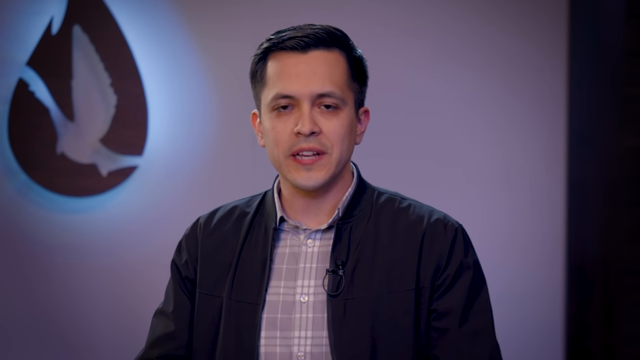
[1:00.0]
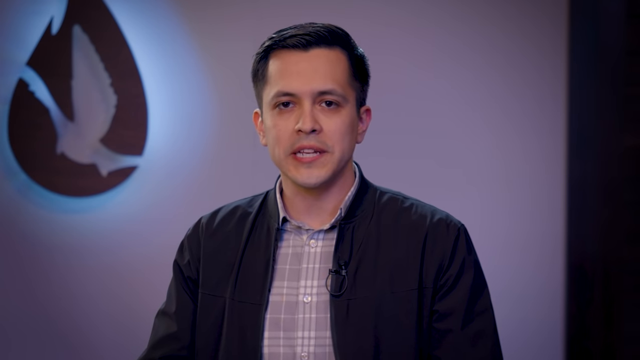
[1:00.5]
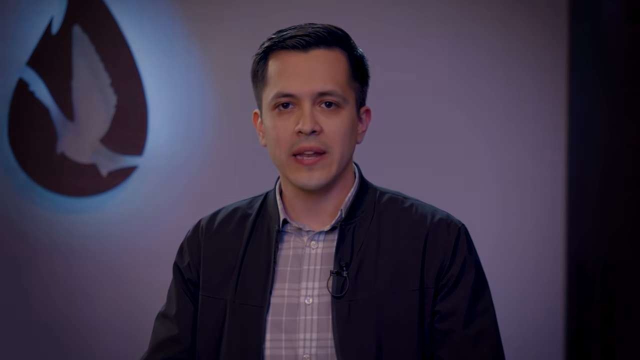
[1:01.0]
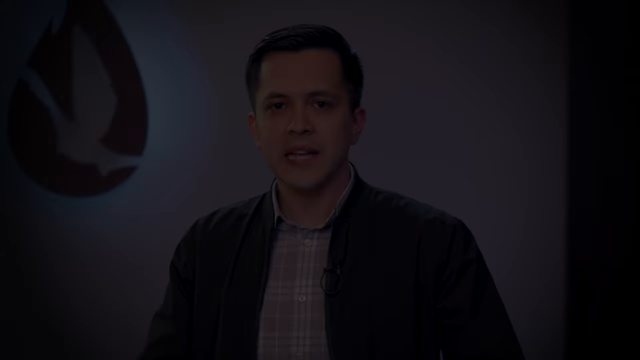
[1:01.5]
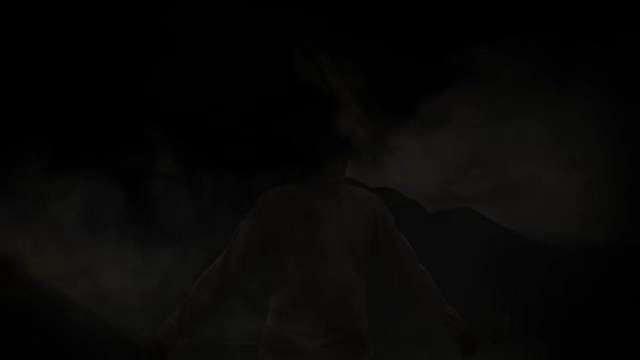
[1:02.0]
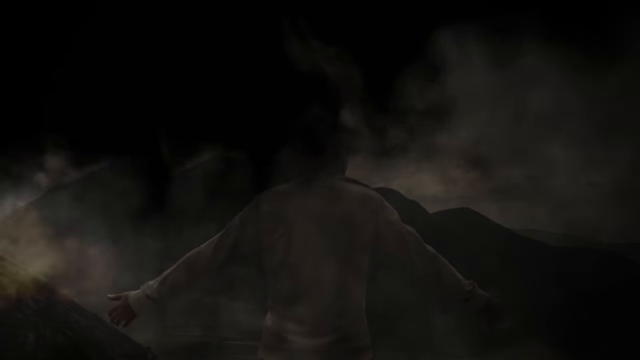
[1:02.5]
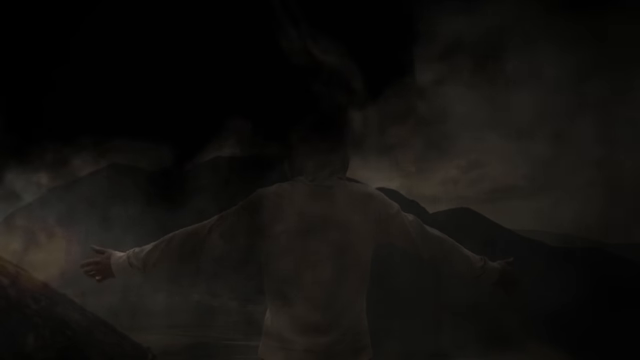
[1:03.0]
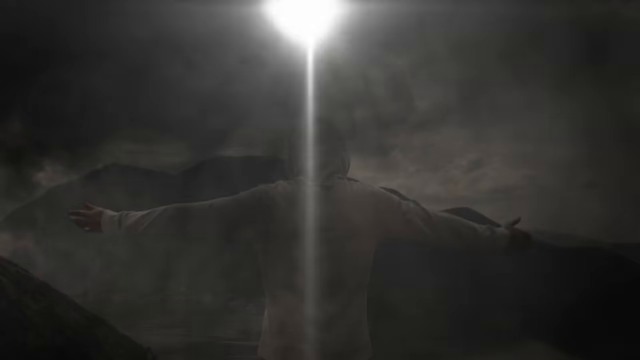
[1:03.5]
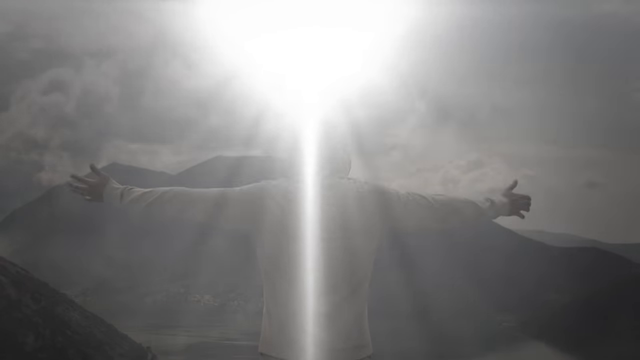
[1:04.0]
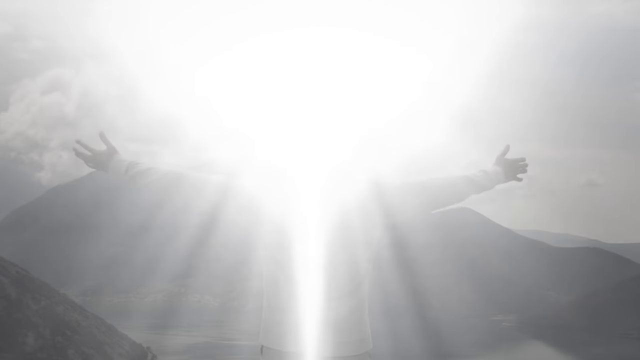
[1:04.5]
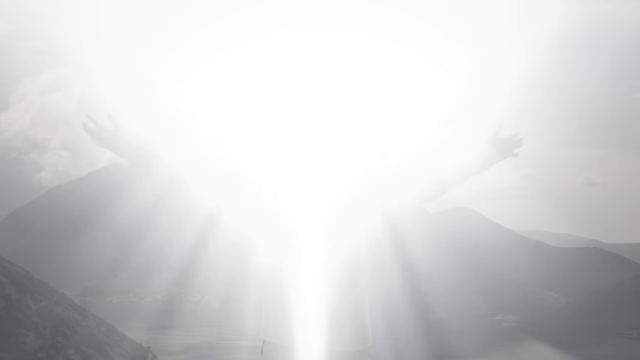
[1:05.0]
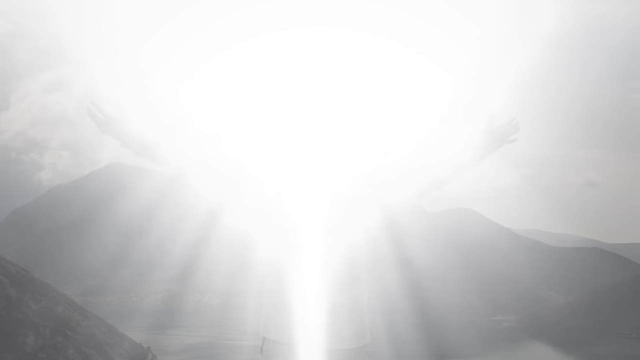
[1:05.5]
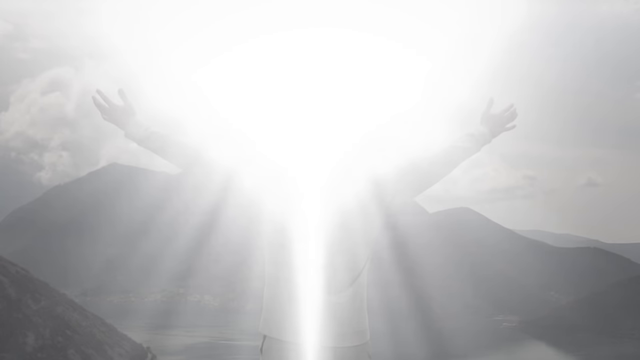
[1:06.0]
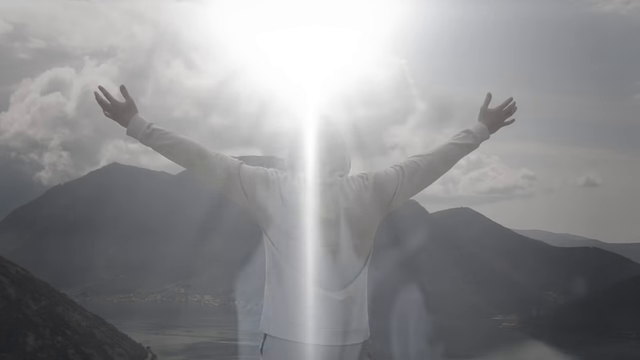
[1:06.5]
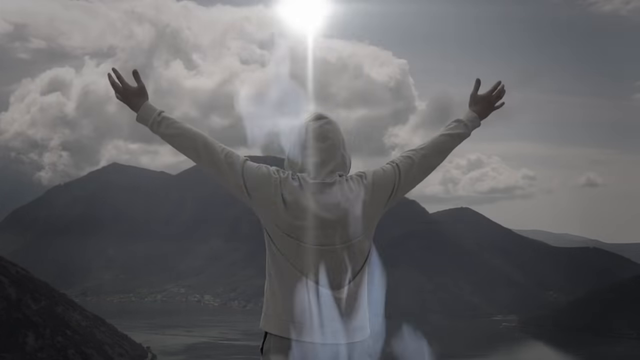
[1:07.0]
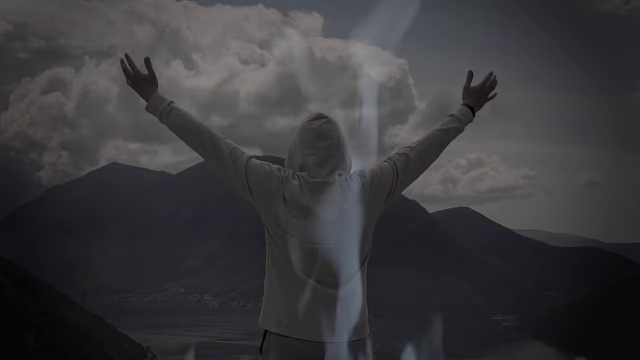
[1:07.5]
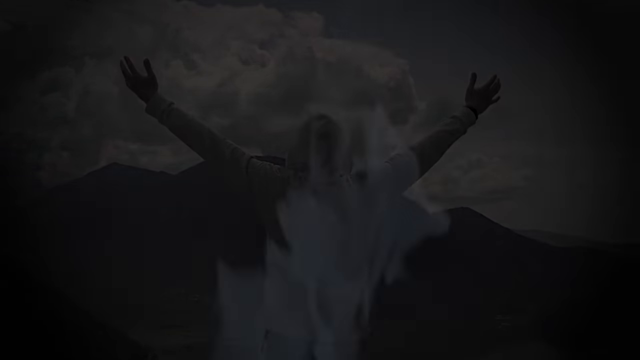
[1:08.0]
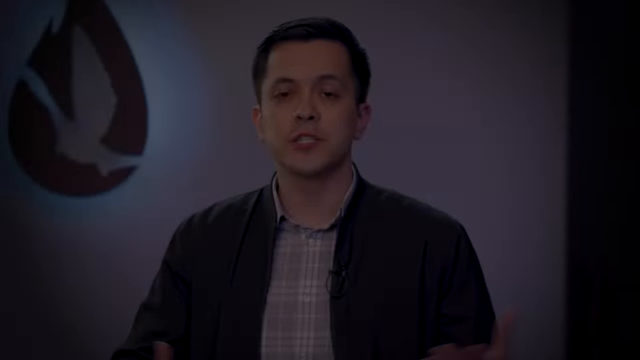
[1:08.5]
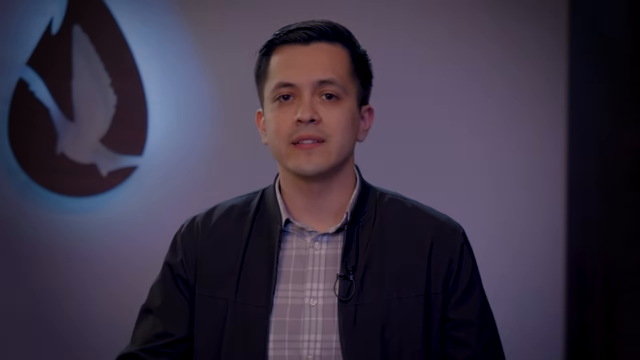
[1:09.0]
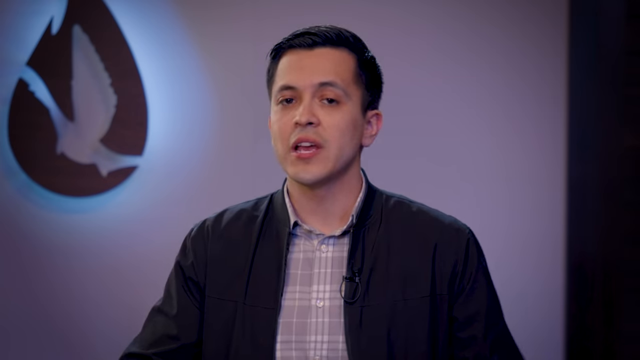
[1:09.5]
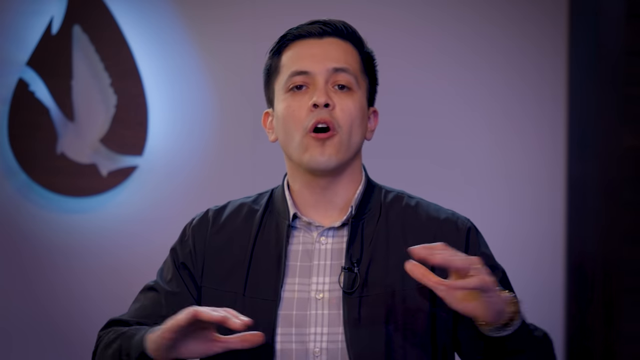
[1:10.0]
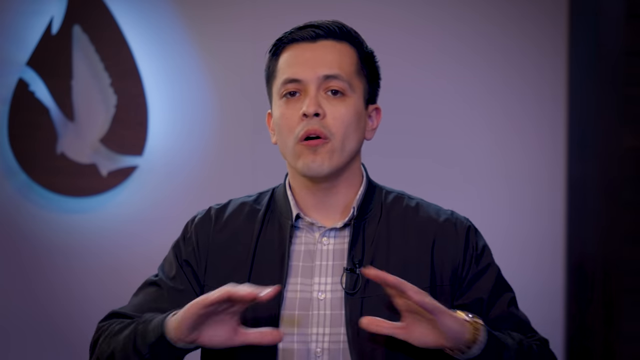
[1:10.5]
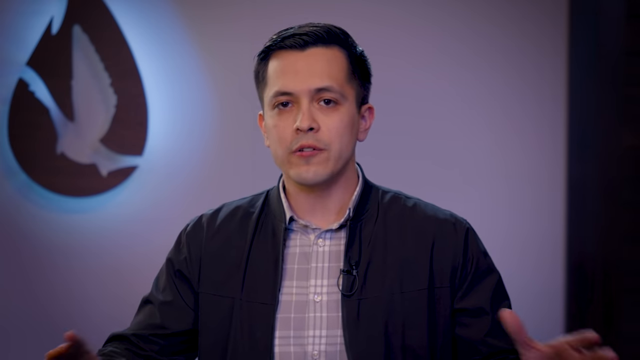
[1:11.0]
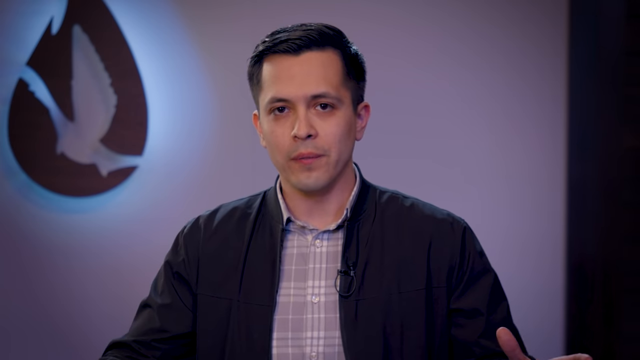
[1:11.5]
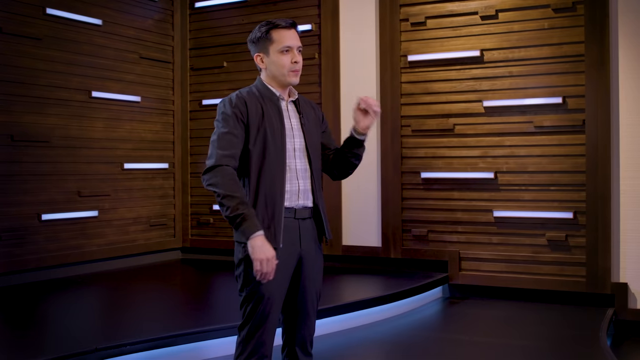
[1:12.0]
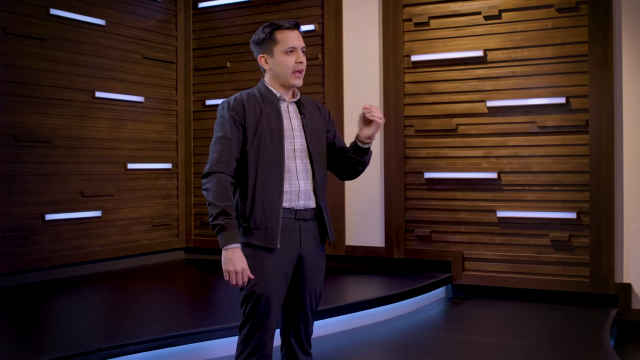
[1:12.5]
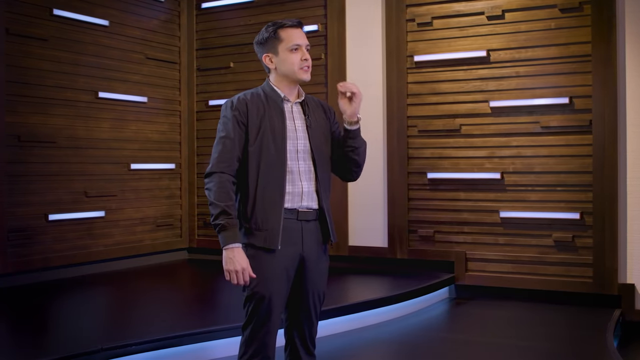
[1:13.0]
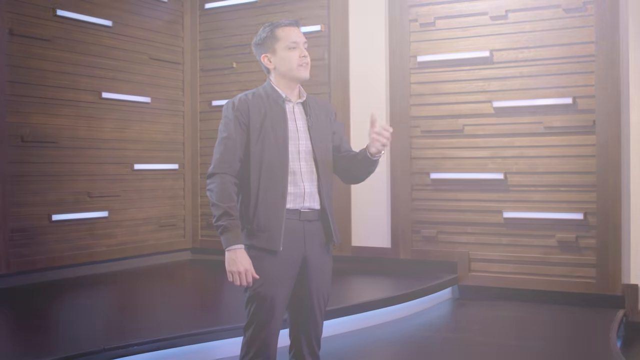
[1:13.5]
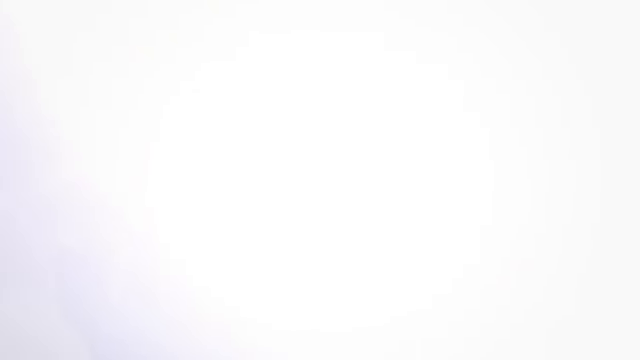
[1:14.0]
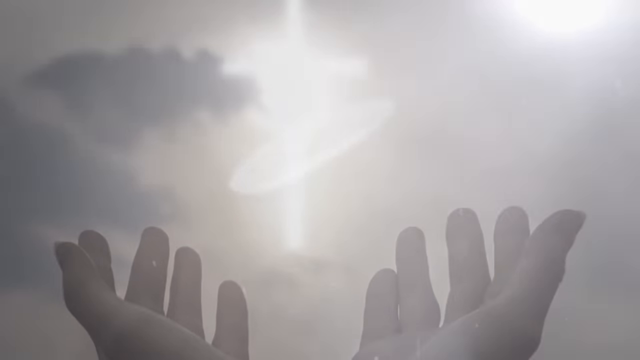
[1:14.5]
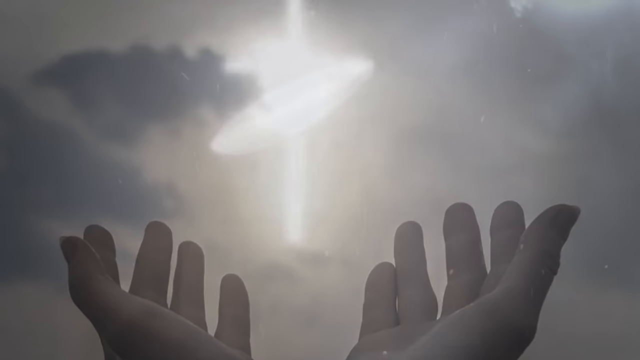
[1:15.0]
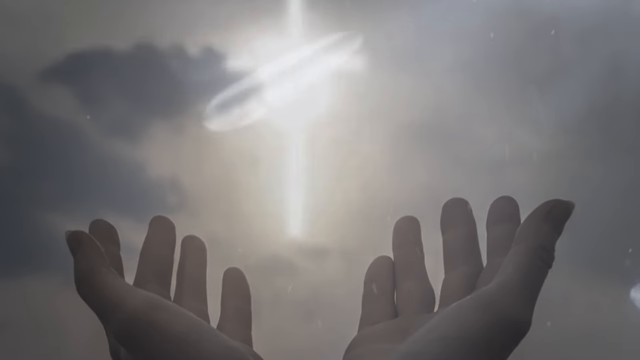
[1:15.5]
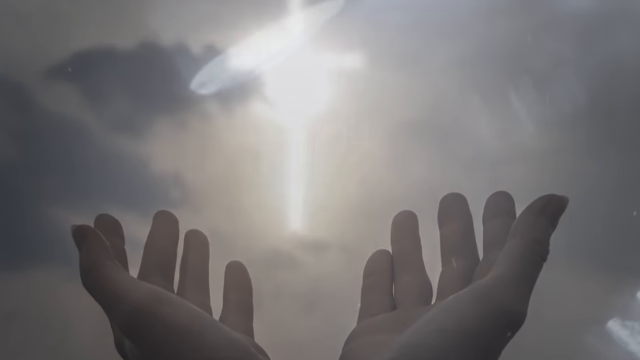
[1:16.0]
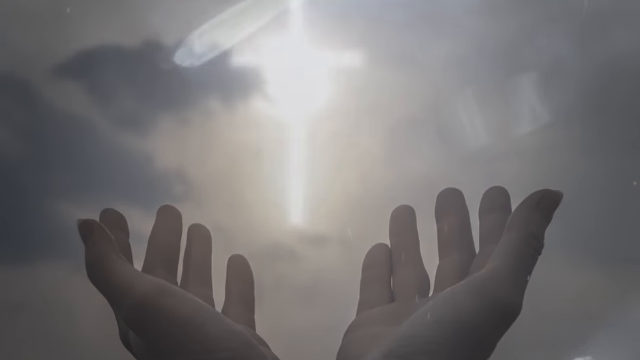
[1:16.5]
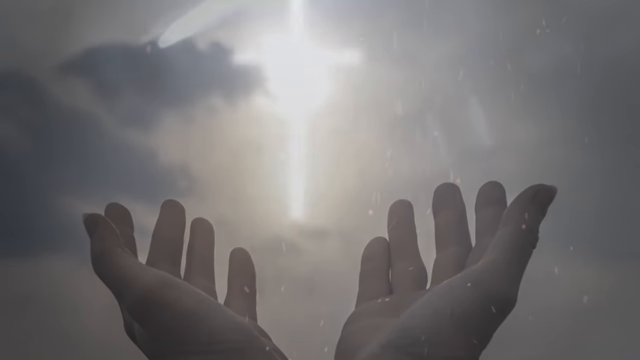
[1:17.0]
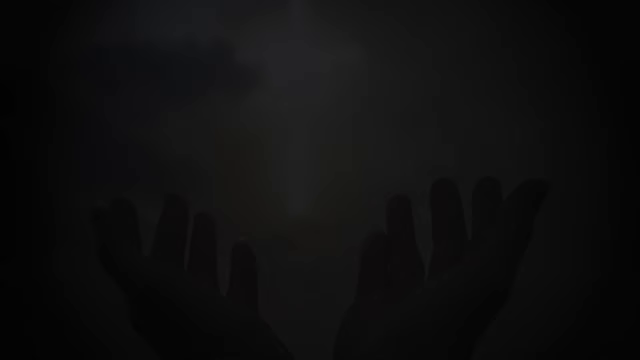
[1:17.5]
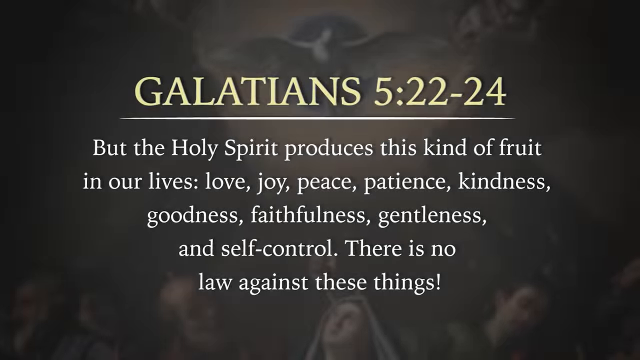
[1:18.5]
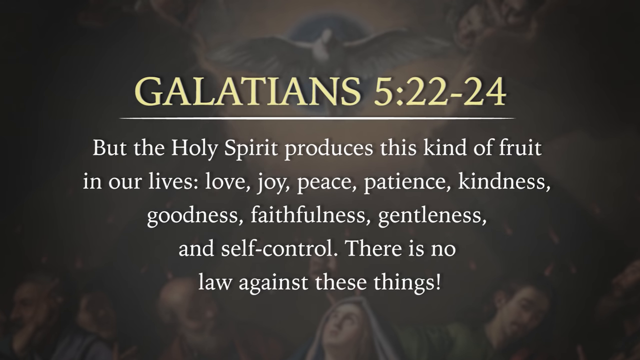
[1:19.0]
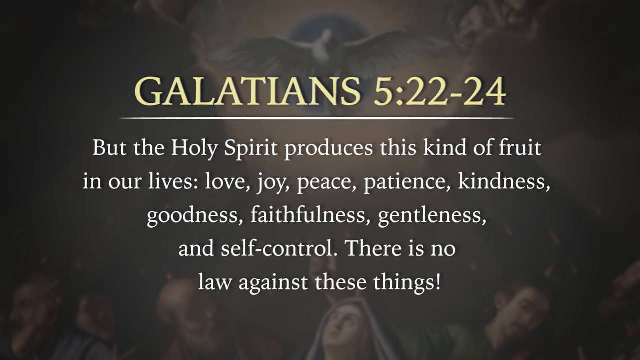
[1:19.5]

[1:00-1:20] A man with short, dark, well-groomed hair, wearing a light-colored t-shirt and a black jacket, stands in the center of the frame and speaks while looking at the camera. Behind him is a white wall with an irregular dark-colored logo on the left. At the right end of the frame there is a small black section. Next, a video shows a man in the center of the frame extending his arms toward the sky; he seems to be wearing a white long-sleeved shirt, and in front of him there are mountains on the horizon. At one point a luminous source appears at the top of the screen, expands for a few moments and then disappears. Near the end, the first man appears again, followed by an image of two hands raised to the sky and a paragraph of white writing in the center of the frame with yellow writing at the top.